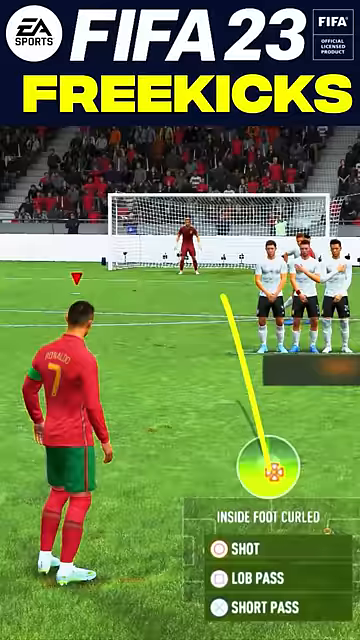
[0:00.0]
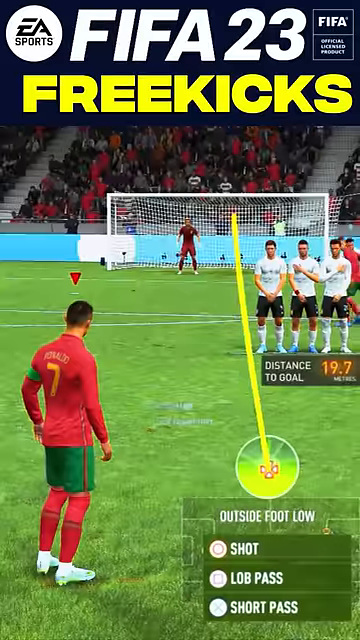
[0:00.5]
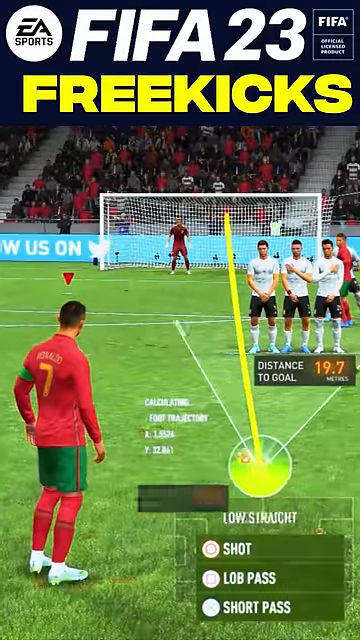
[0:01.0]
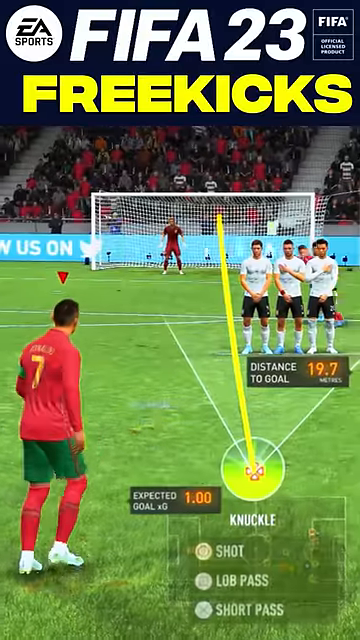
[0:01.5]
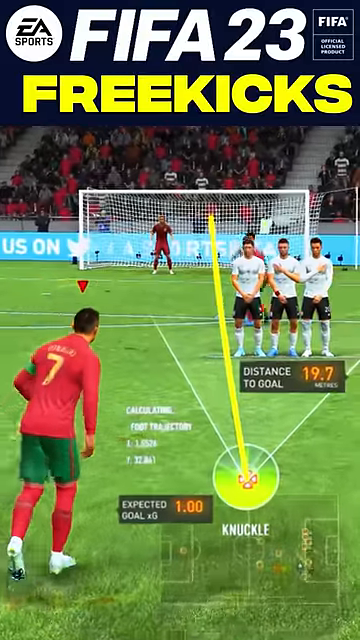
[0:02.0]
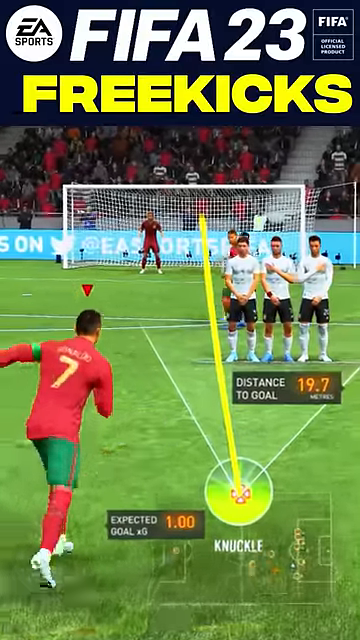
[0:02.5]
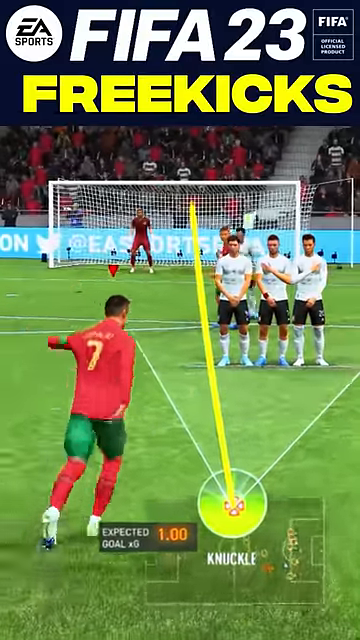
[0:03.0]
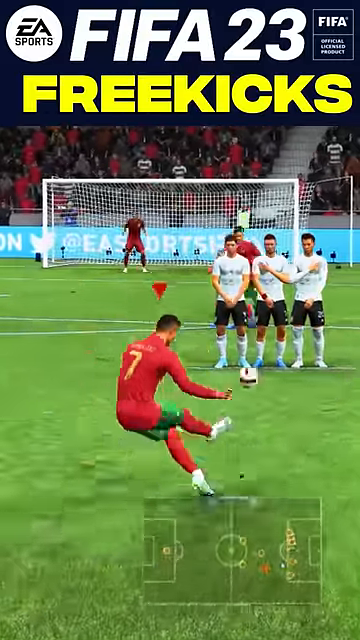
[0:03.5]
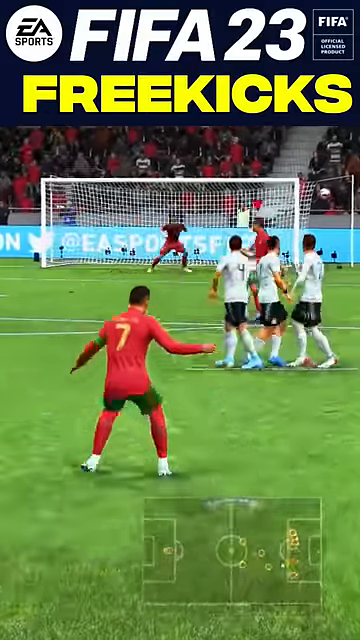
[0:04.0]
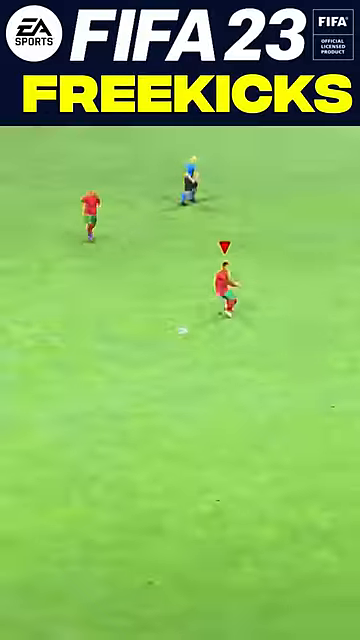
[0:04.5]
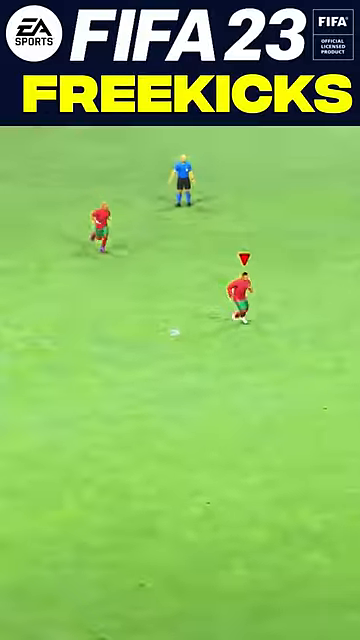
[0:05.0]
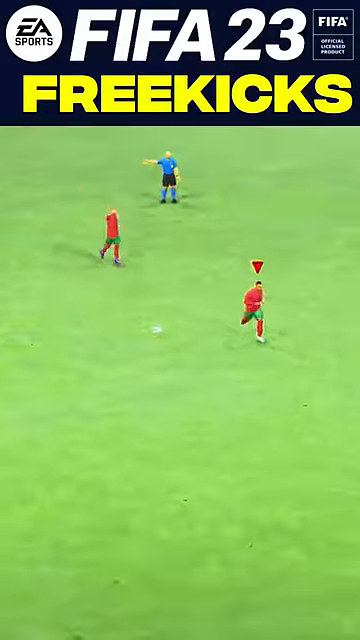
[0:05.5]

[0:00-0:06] The footage comes from a soccer, or football, video game. At the top, above the video, are logos: the EA Sports logo, with the game title FIFA 23 written in white next to it. Below that, bold yellow text reads "free kicks." This all appears to be on a blue background. Beneath it is a vertically formatted video showing a free kick at a soccer match. The player taking the kick is Ronaldo; his character is recognizable even from the back, and his red jersey shows the number 7 and the name Ronaldo. The game's system is displayed: a yellow line shows the angle of the aim, and the kick type is chosen from low, straight and outside before settling on a kick labeled "knuckle." Next there appears to be a choice between shot, lob and pass. Three players in white try to block the free kick, and the kick seems to go off to the side before curling back toward the goal.